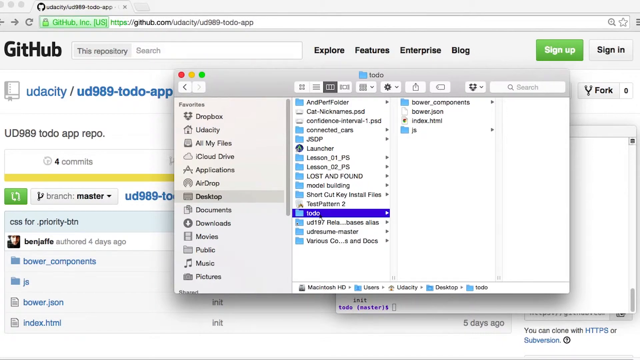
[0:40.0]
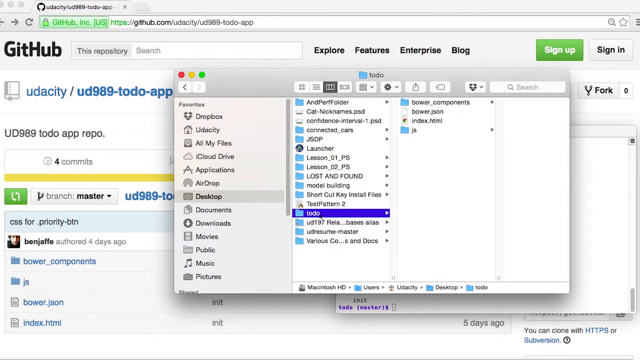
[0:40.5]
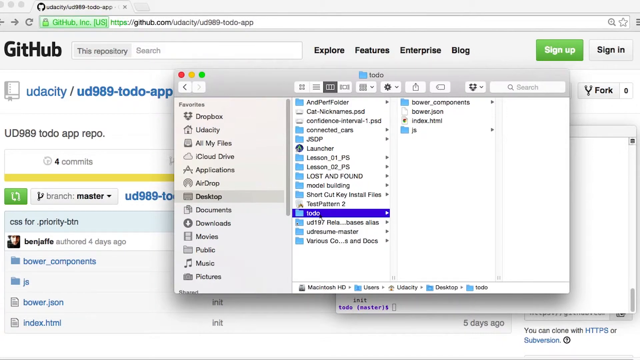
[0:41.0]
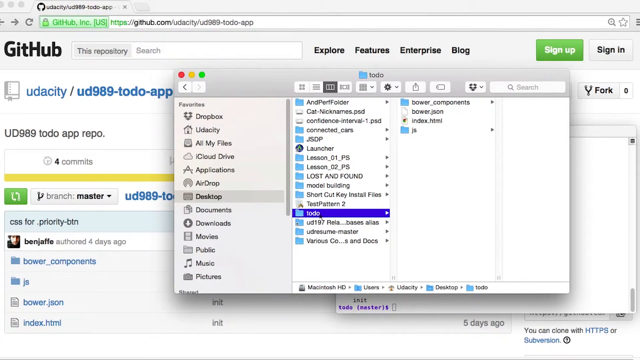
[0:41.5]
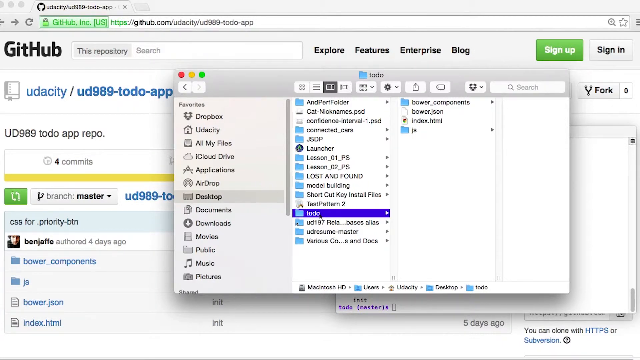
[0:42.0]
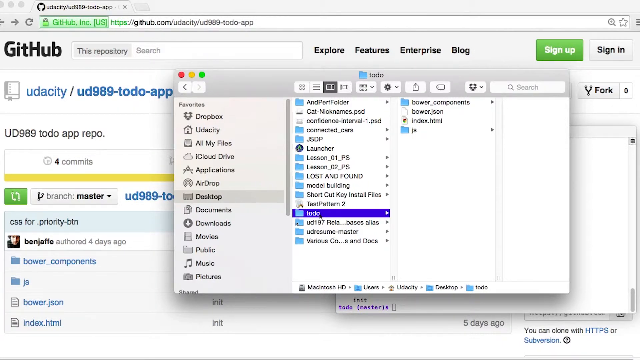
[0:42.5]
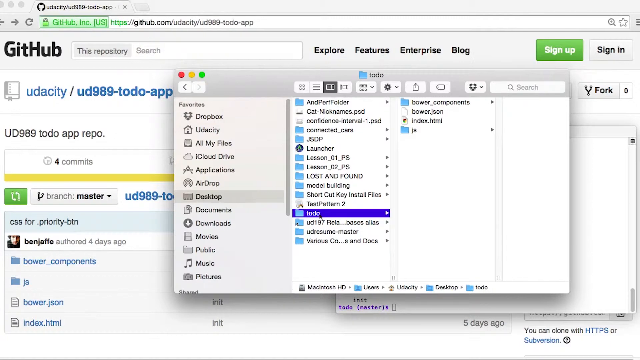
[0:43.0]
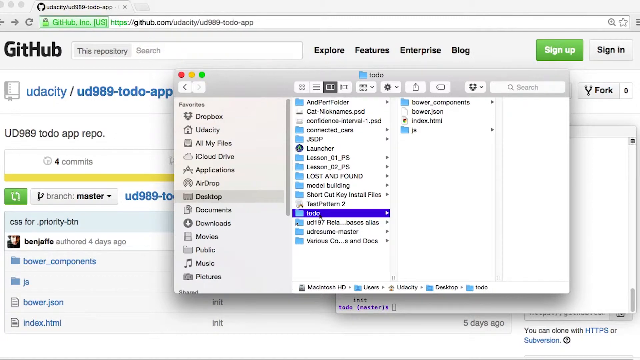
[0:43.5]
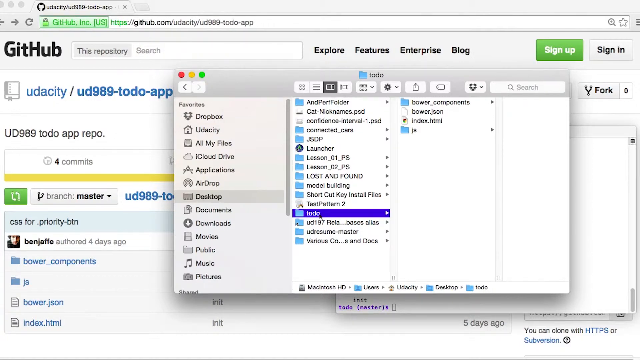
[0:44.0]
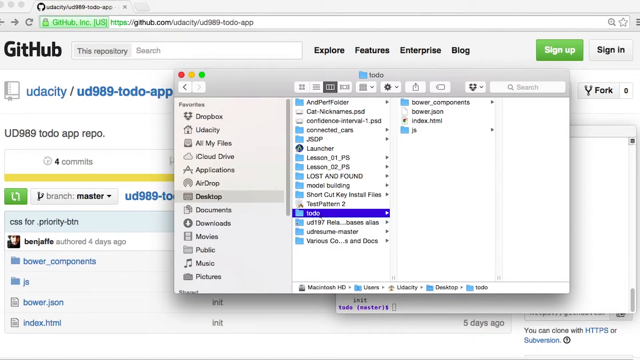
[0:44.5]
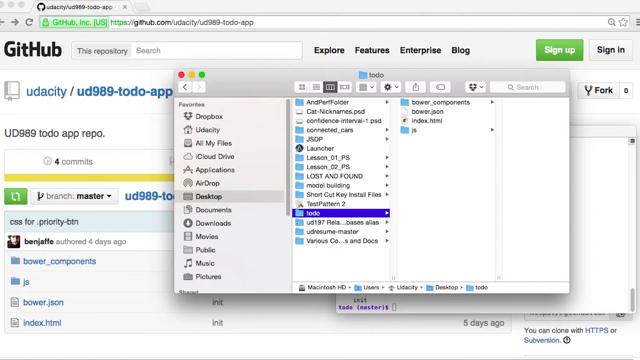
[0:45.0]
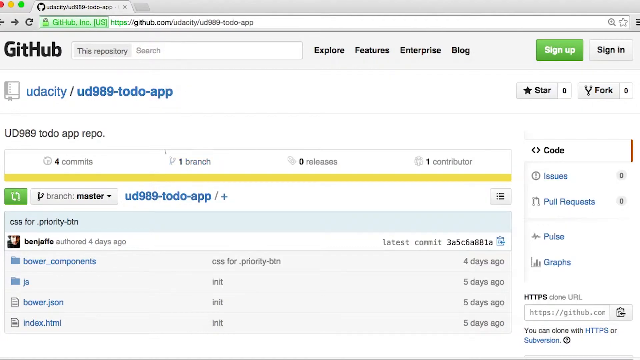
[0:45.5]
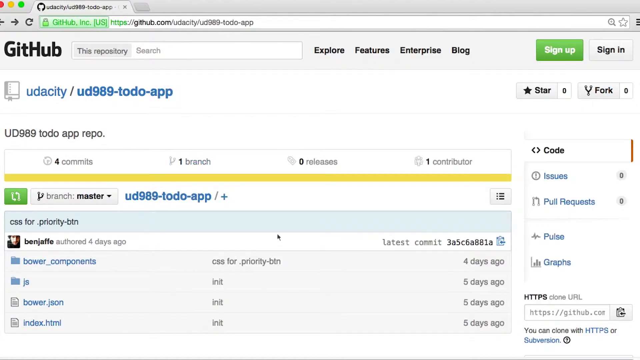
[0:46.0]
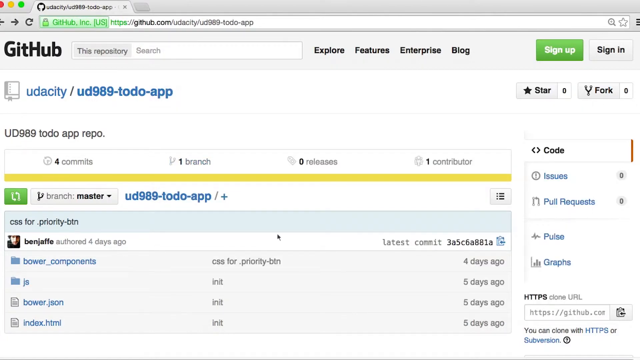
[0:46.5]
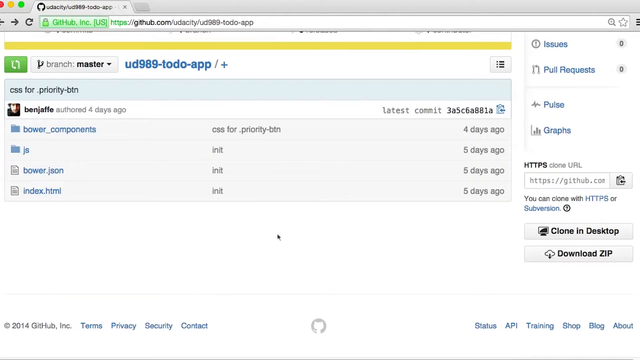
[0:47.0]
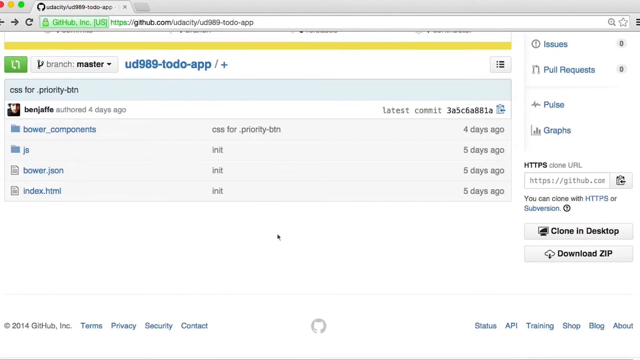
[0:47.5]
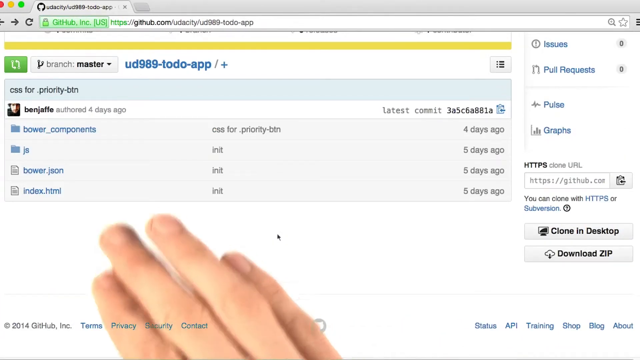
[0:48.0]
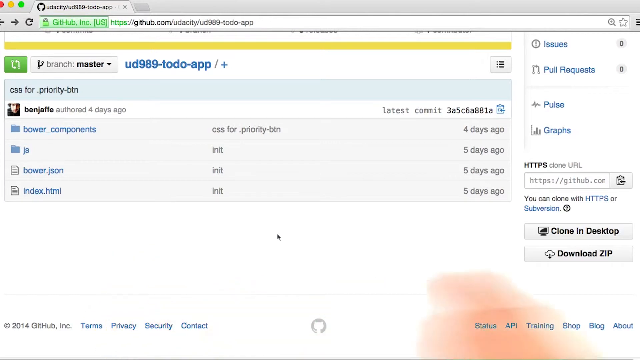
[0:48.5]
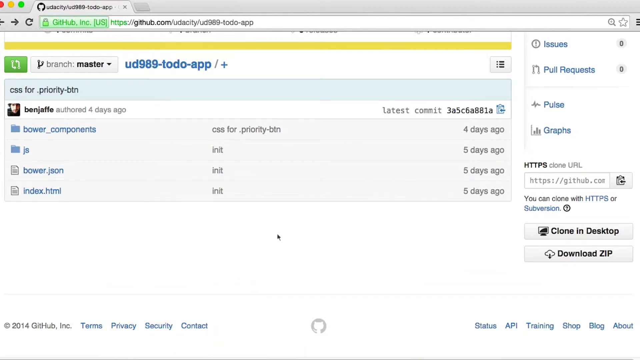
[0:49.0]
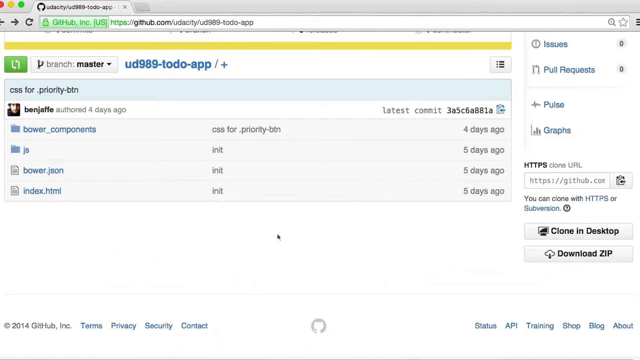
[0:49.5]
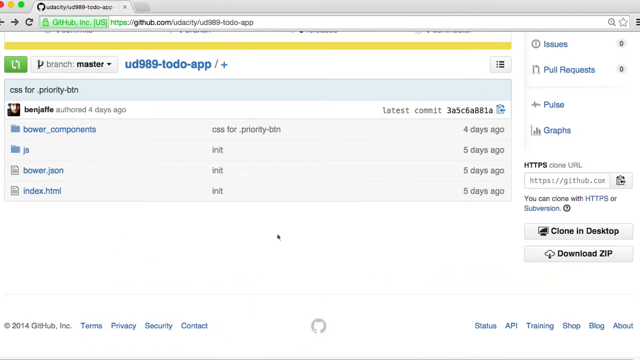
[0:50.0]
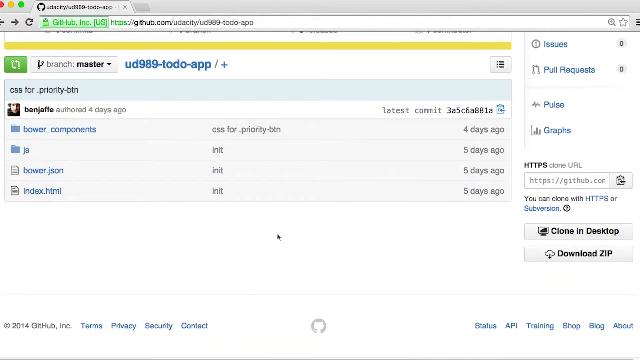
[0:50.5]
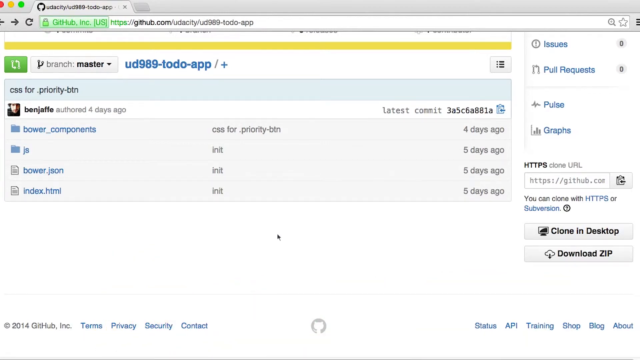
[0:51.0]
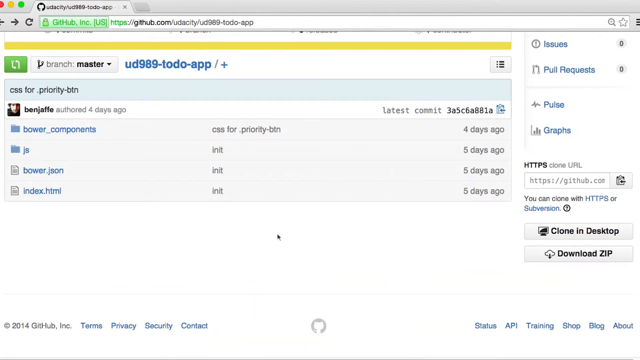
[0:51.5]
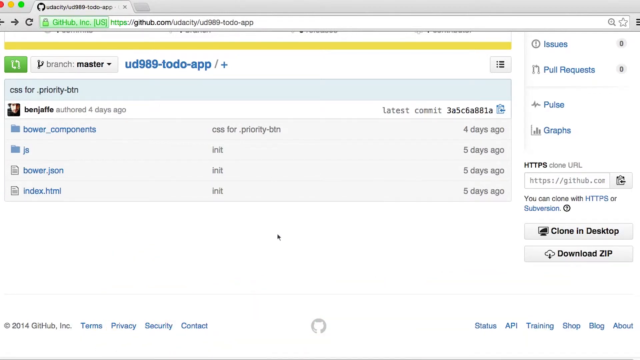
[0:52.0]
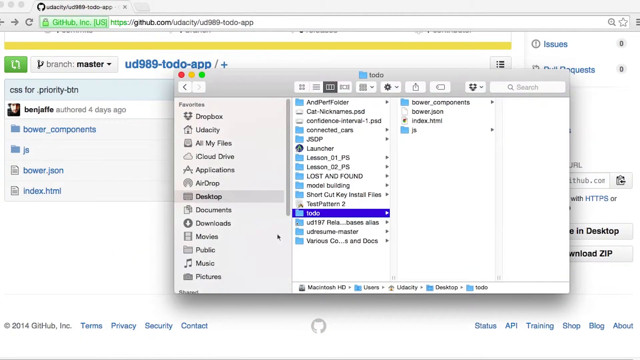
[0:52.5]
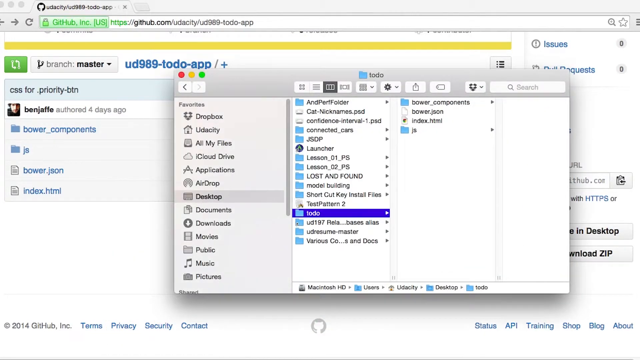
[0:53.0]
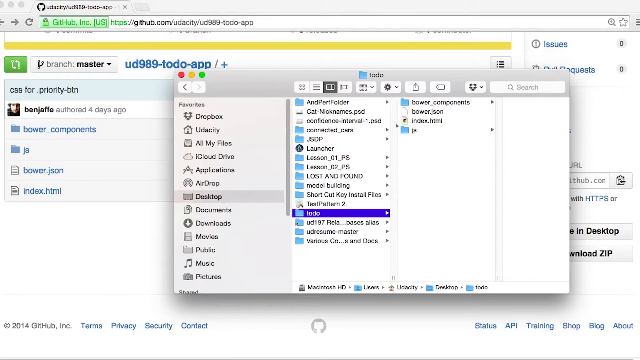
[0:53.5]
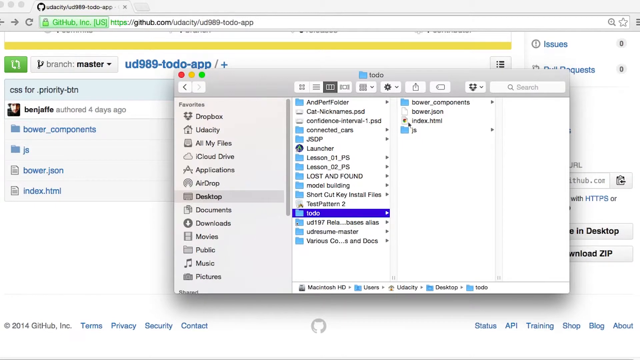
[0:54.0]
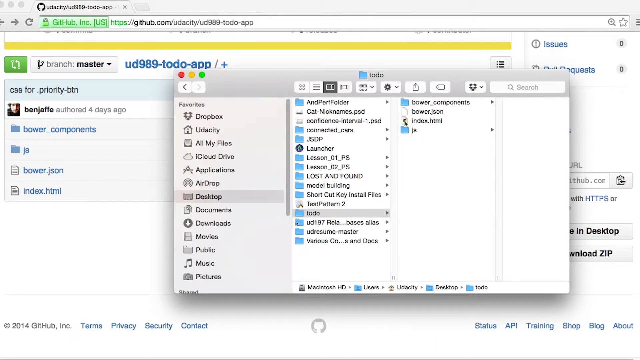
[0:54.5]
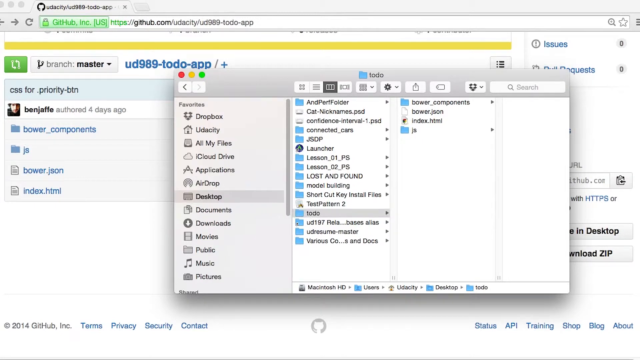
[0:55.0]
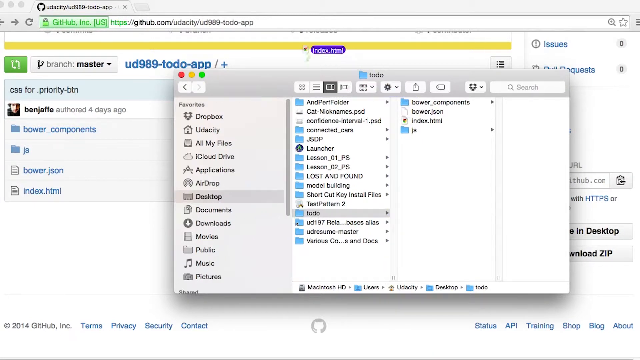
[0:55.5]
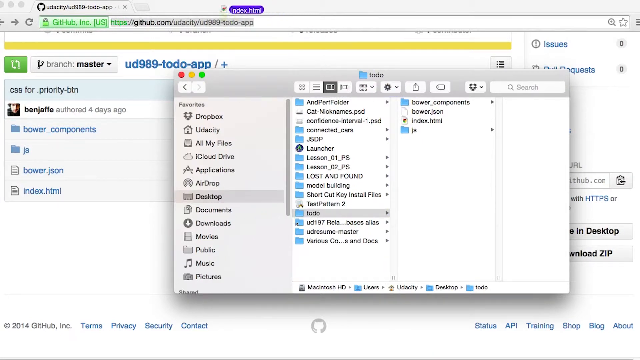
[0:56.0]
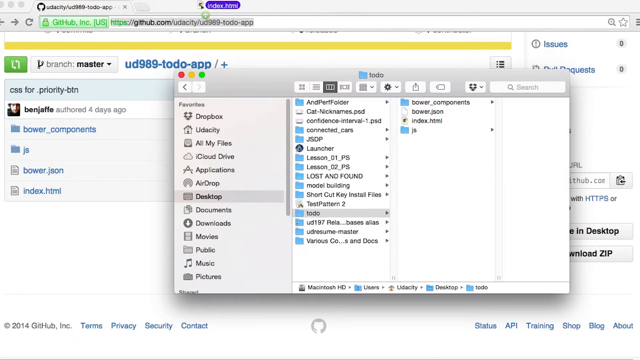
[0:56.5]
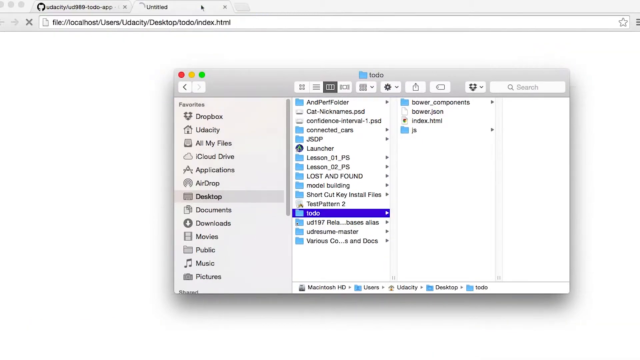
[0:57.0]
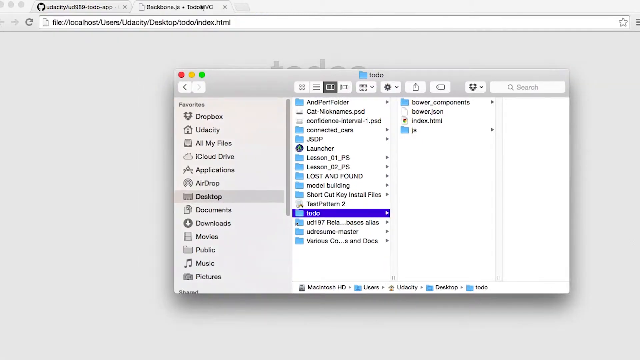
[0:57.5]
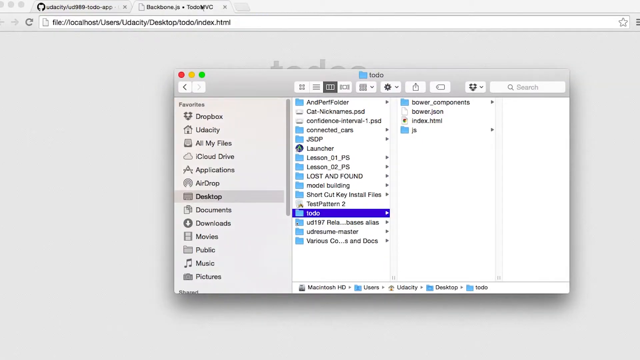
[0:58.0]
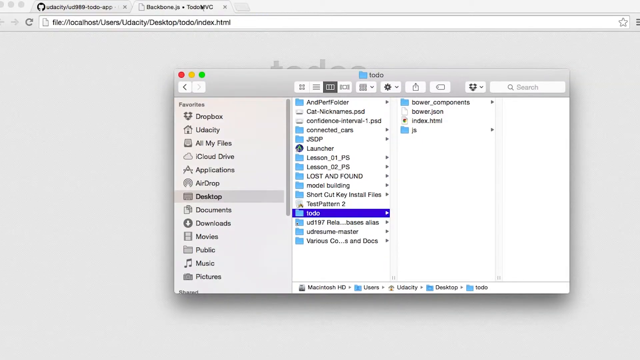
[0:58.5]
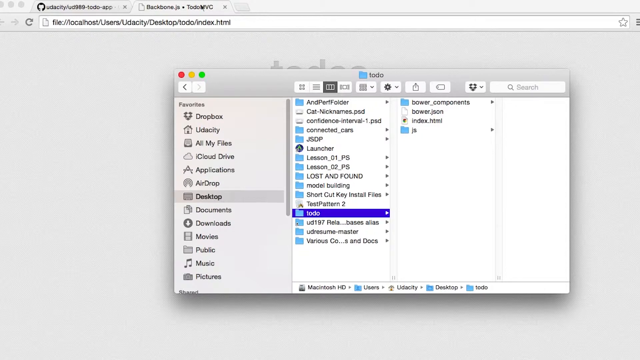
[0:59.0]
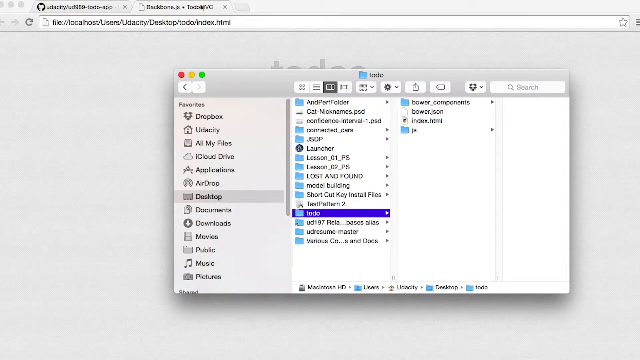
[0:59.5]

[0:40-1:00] The mouse is still hovering over the ToDo folder, with the GitHub website in the background. The mouse stays over the folder for about 5 seconds, and then the folder is closed. The GitHub website is shown and scrolled down, and as it scrolls, another Caucasian hand appears and points at the website. The view returns to the folder containing the To Do folder and multiple other folders. The To Do folder is dragged with the mouse into a new tab in the browser, creating a different link. The new page in the background is completely white, showing nothing else. The top of the browser now has two tabs open. For a few seconds the mouse again does not move from the new tab it created, while the link to the To Do folder remains on the screen and has not been closed.